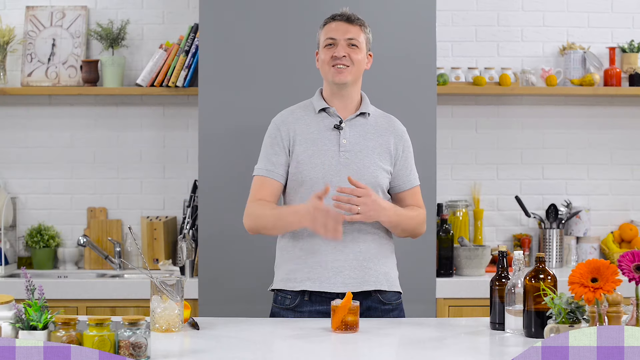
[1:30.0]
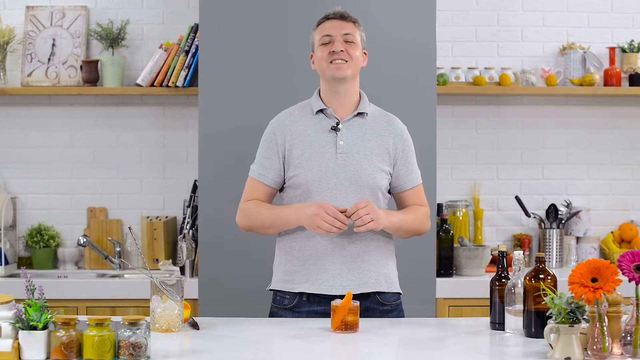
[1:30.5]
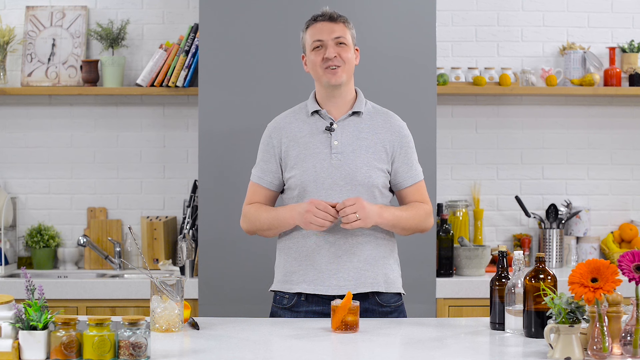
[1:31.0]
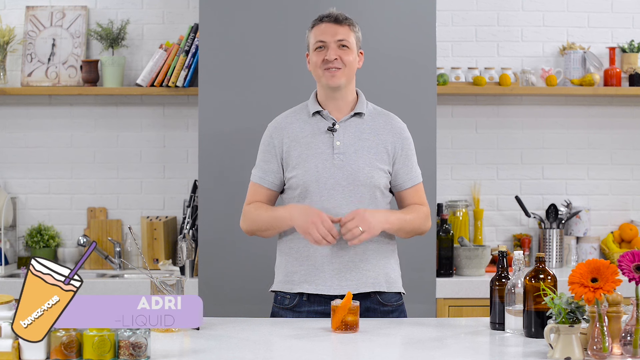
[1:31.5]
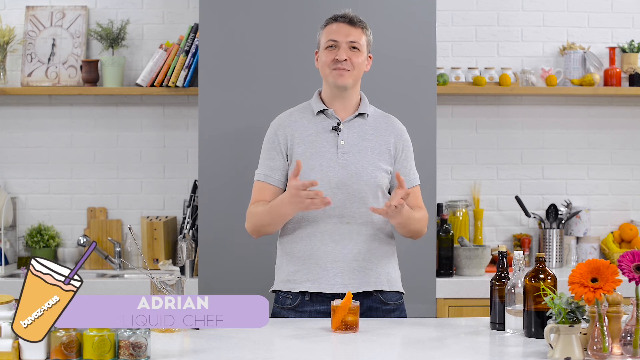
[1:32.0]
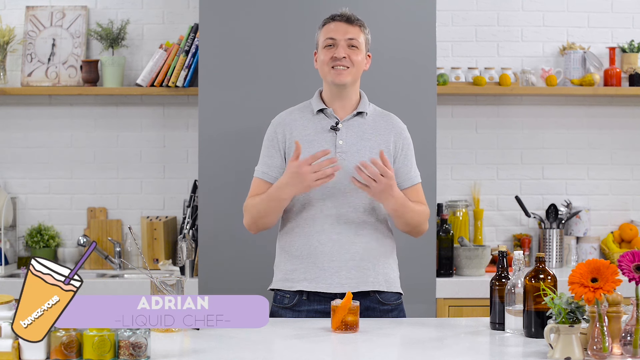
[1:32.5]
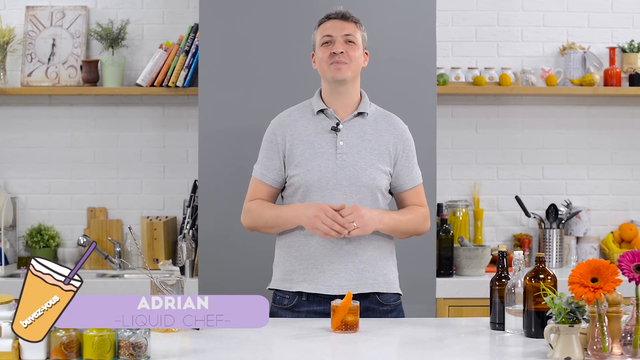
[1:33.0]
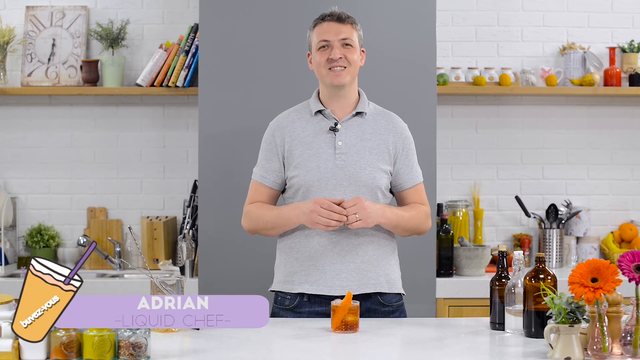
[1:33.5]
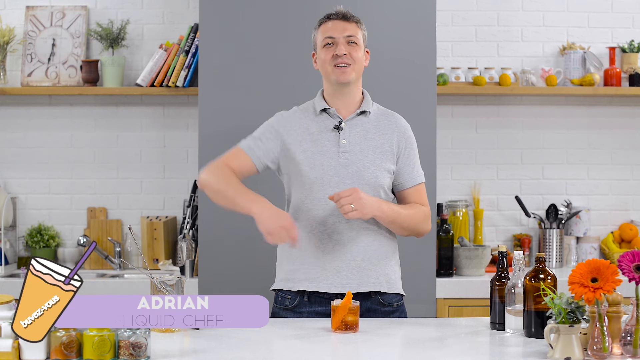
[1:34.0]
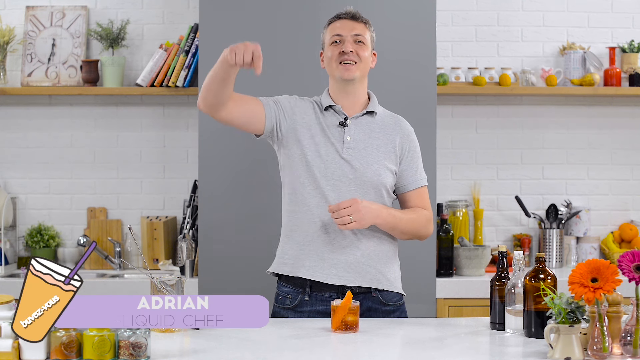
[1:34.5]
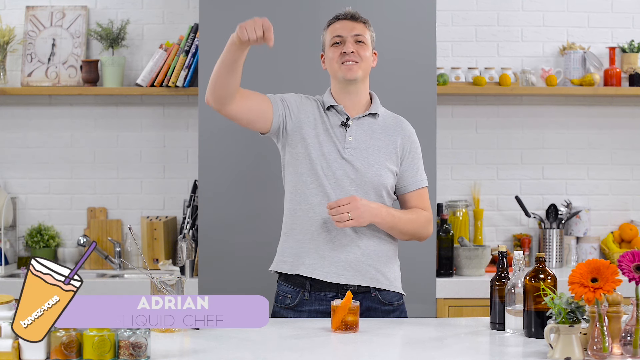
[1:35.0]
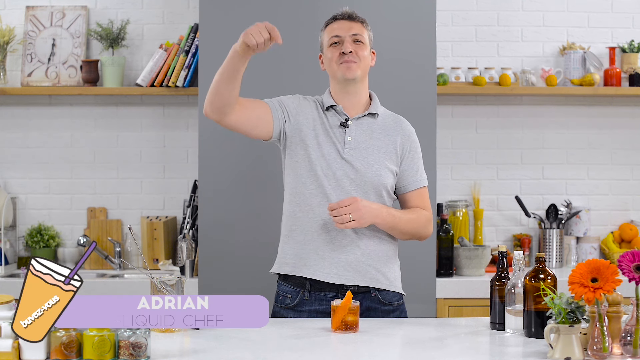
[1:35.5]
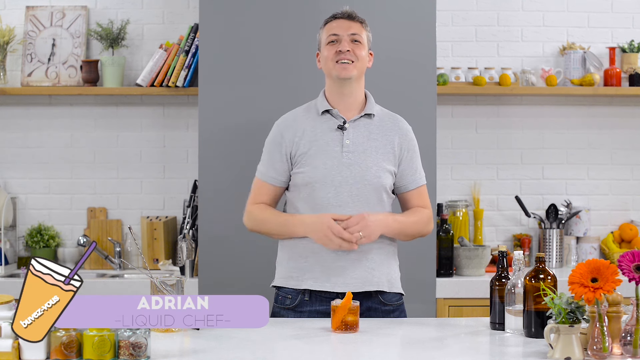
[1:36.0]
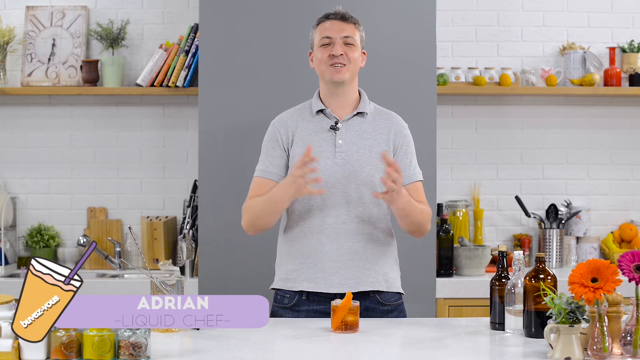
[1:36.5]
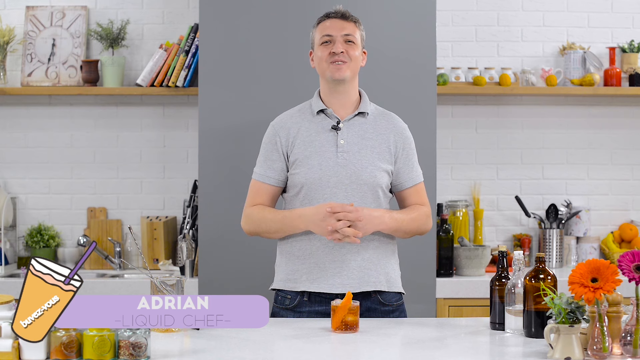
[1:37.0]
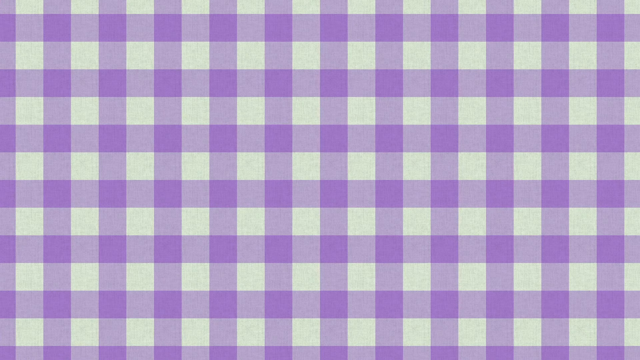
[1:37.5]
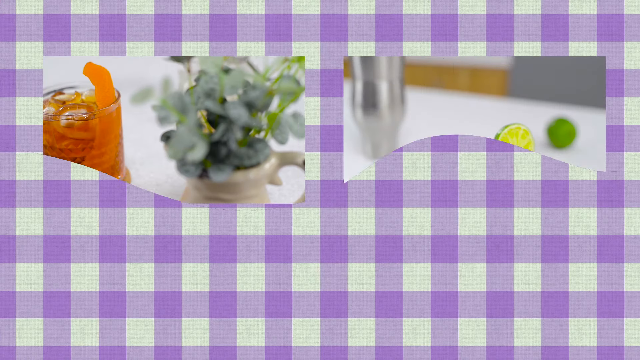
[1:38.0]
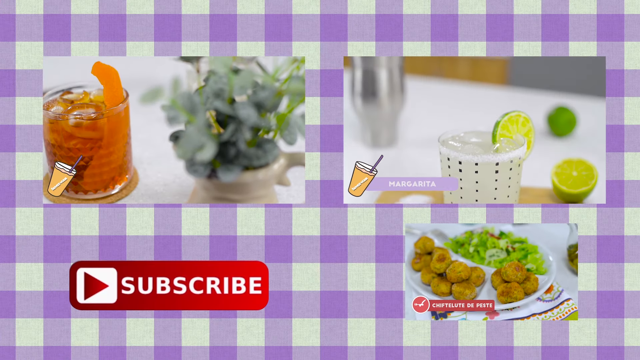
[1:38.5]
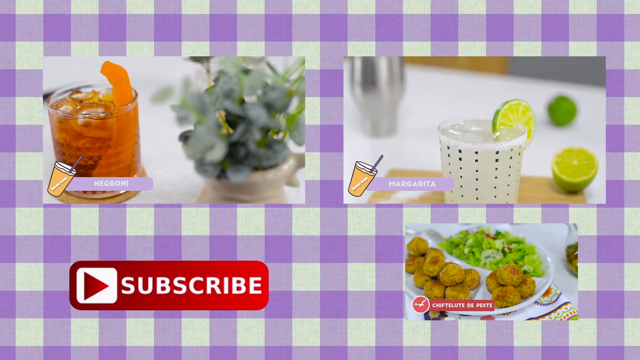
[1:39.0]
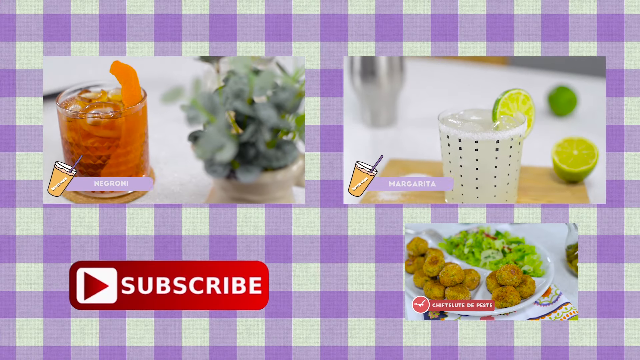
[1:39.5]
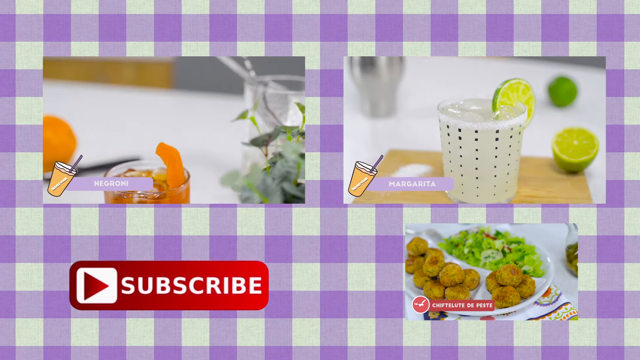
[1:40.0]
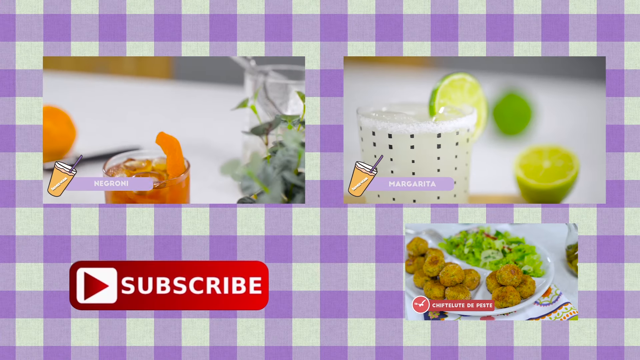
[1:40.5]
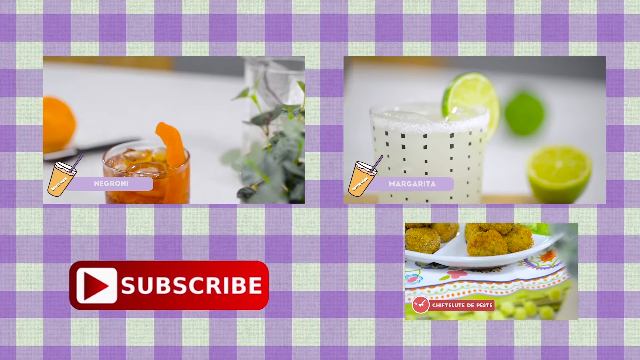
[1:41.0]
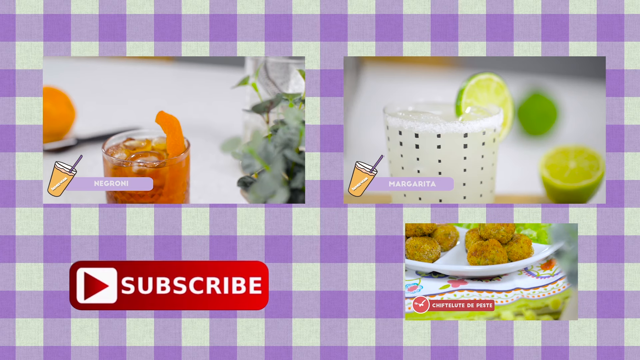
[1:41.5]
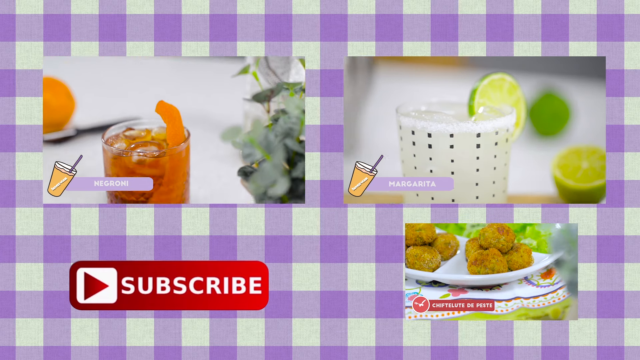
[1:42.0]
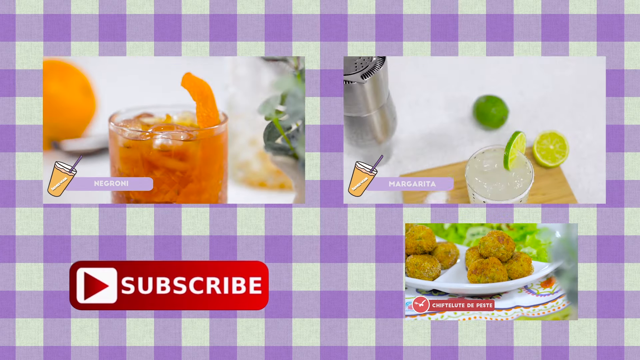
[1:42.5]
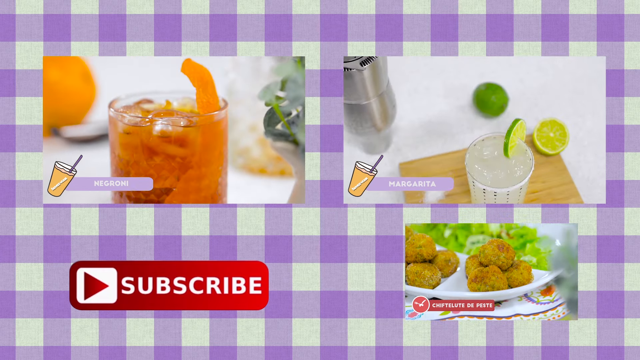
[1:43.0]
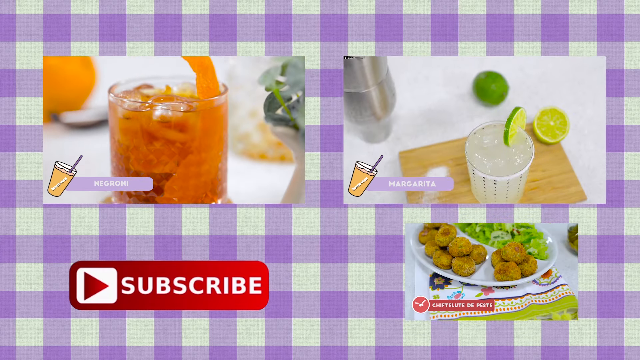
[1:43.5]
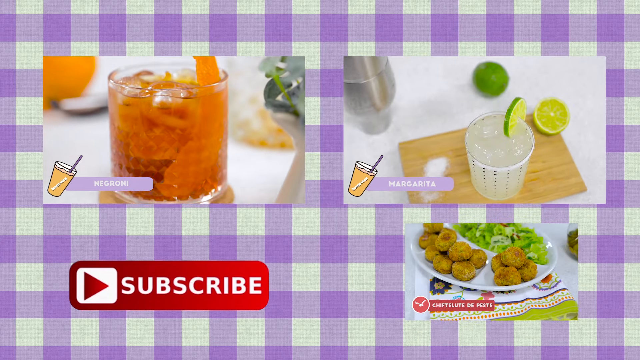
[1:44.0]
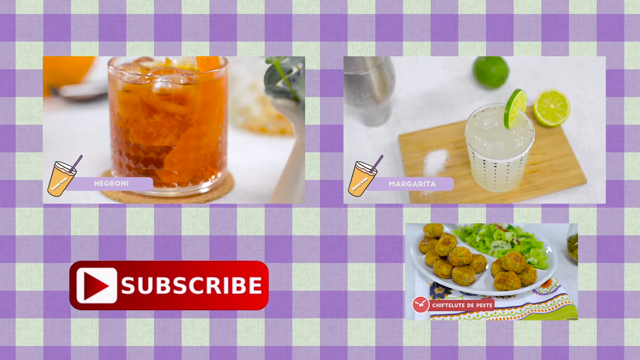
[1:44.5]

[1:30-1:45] A smiling man with gray hair and a gray shirt is standing in a studio kitchen. A little banner at the bottom says "Adrian," presumably his name. In the background are shelves with some cookbooks, some spoons, and some pasta. In front of him is a counter with a cocktail on it, and on the right-hand side of the counter are some bottles. The man gestures, smiles, and points downwards as if suggesting to hit the subscribe button. The video then cuts to a gingham background on which three small screens appear, showing two drinks, one a Negroni and another a Margarita, and some food items in the bottom left-hand corner that look like some sort of fried ball with maybe some guacamole. In the bottom left-hand corner is a red arrow with the word "subscribe" next to it.